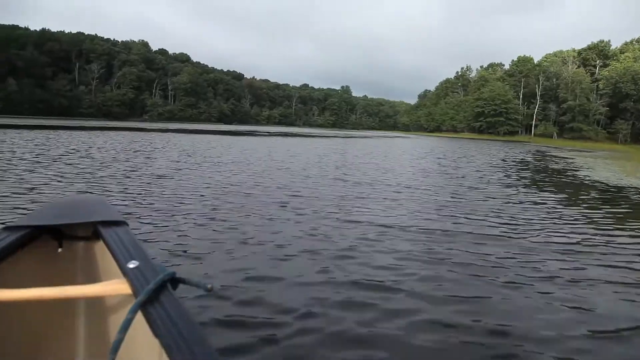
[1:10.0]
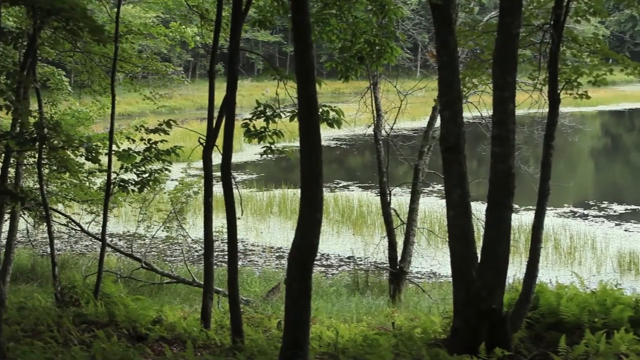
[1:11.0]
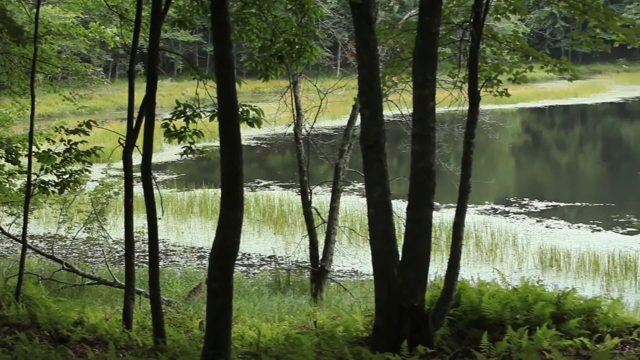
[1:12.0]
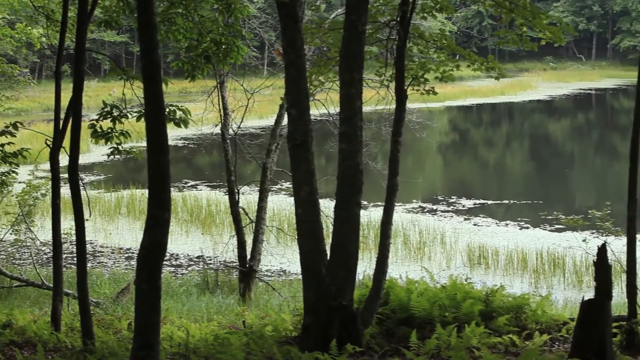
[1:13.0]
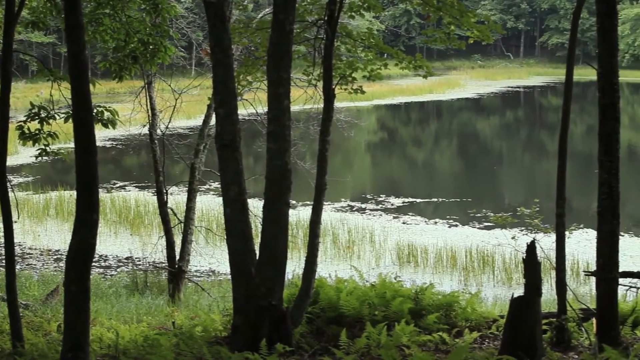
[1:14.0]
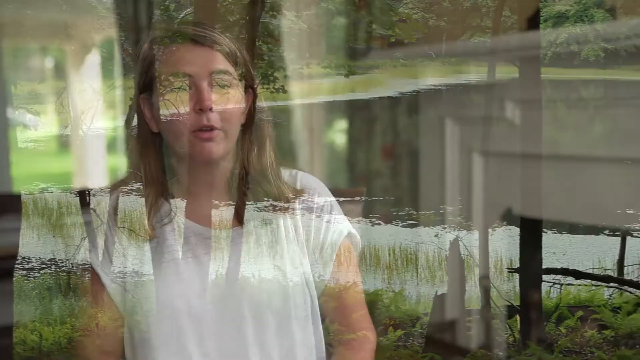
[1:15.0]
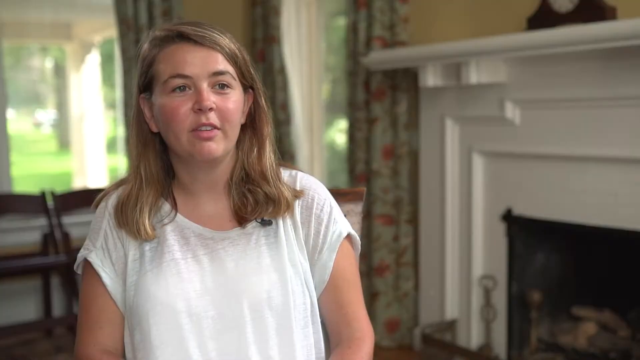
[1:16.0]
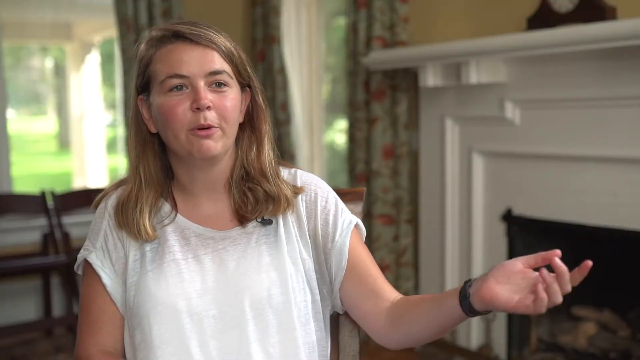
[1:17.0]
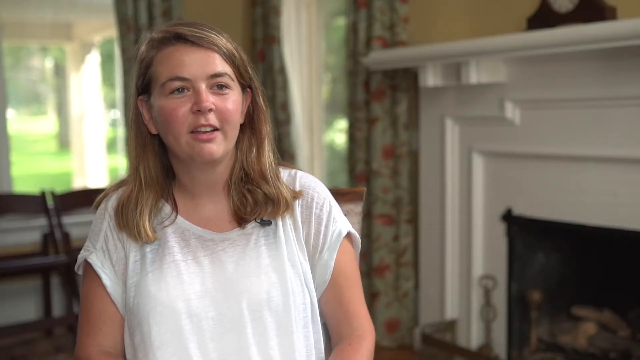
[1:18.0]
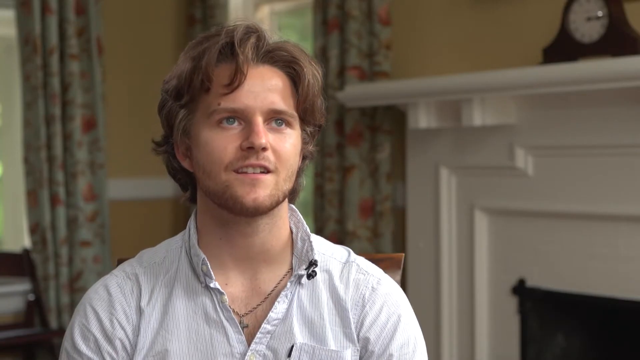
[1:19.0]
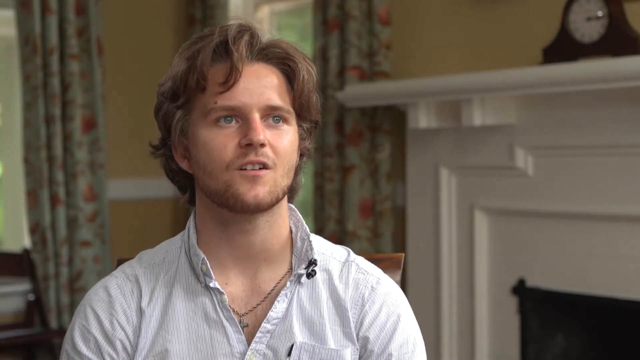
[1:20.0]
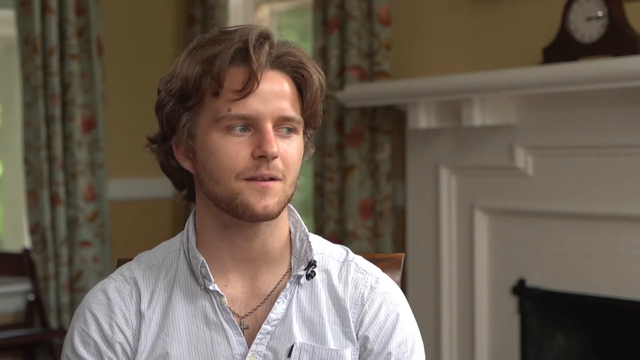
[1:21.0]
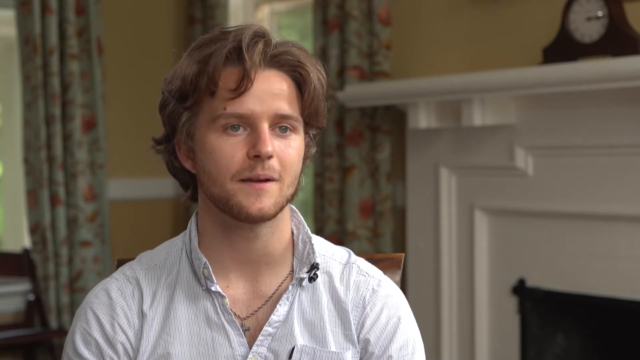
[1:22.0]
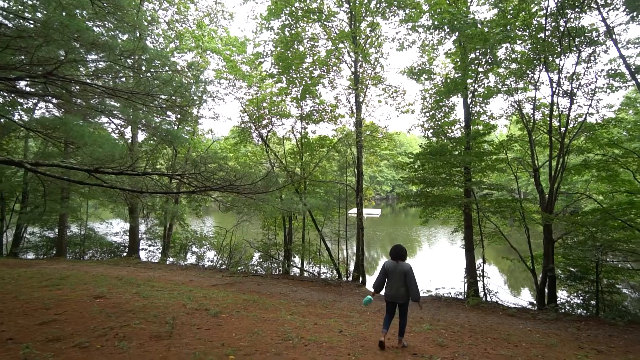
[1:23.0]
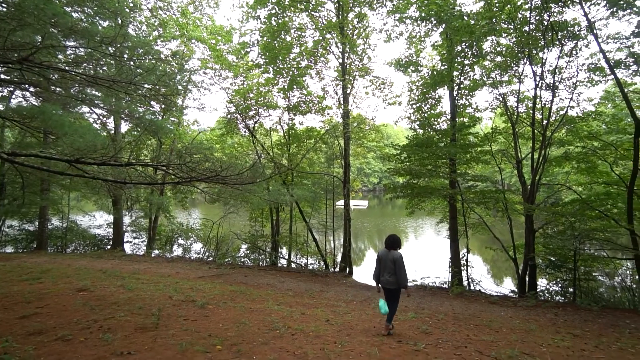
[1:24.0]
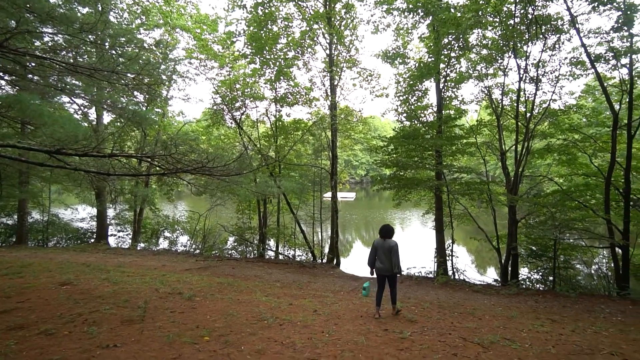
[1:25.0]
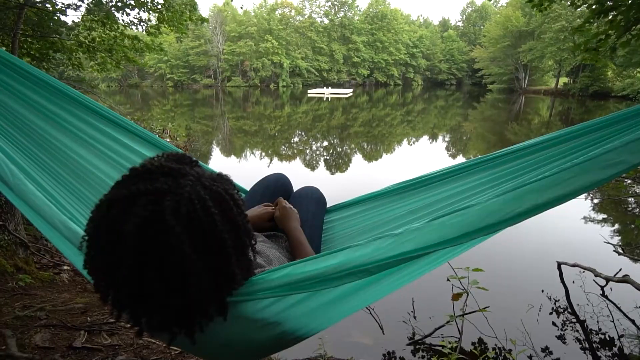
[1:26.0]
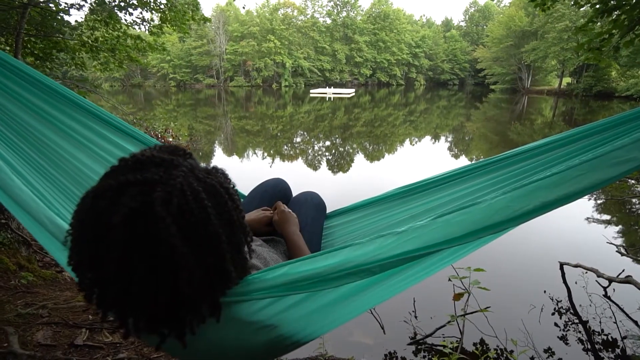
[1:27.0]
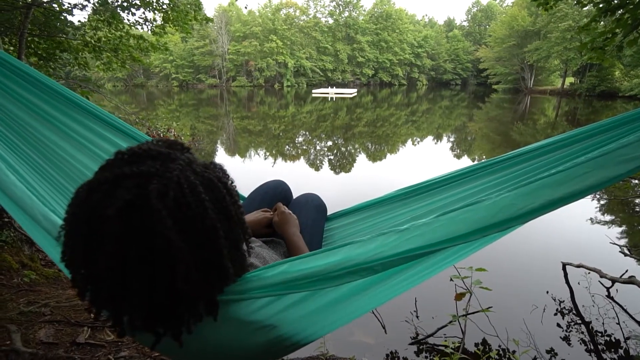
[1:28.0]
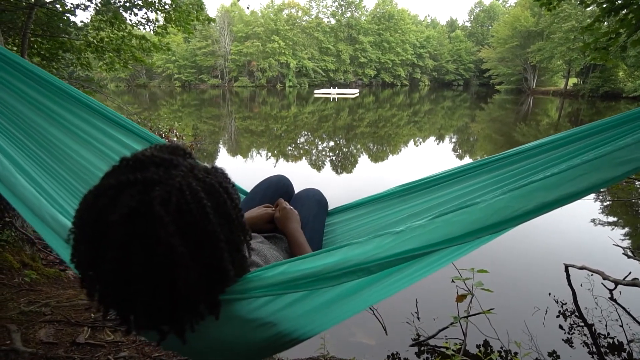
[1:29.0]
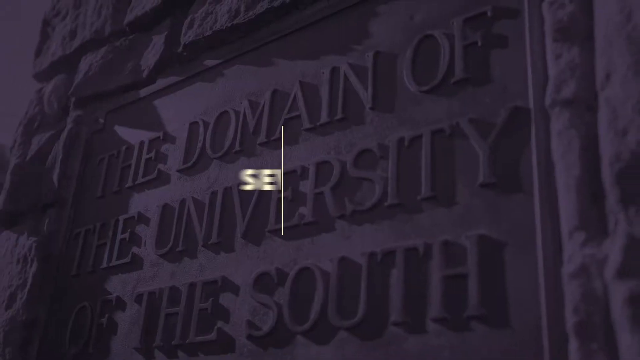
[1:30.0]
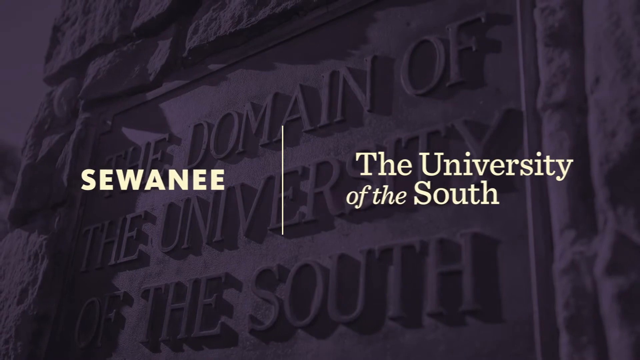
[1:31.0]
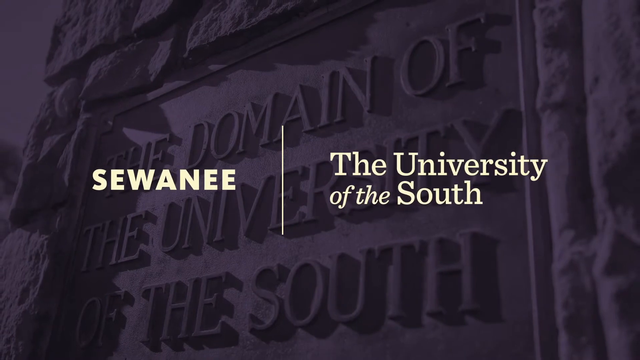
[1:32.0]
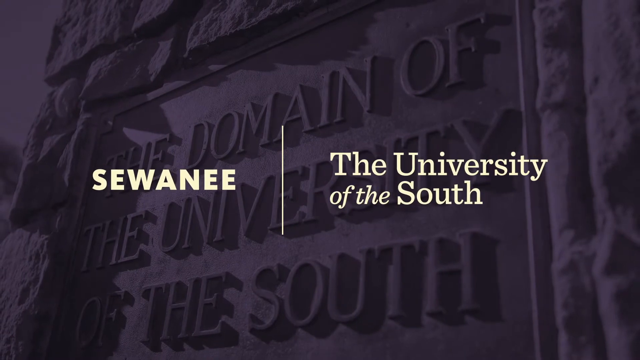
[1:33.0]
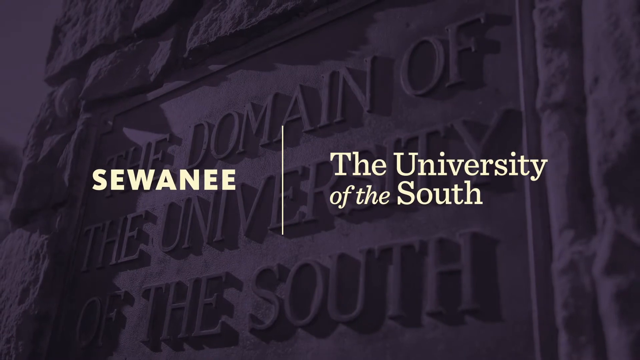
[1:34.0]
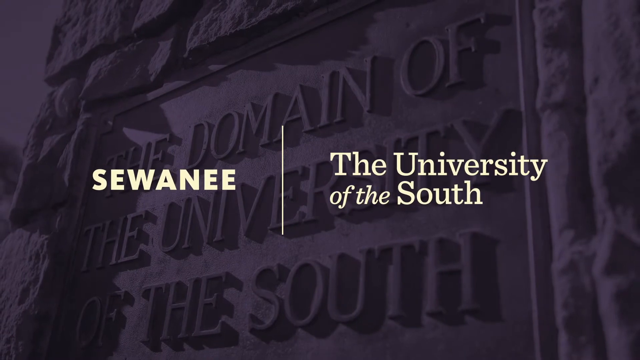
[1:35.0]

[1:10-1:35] The POV shot of the man kayaking through the lake gives way to a shot of some trees, tall green grass and a body of water behind them as the camera pans from left to right. The video cuts to the inside of the yellow-painted house, where Ellie Whitmore is sitting, speaking and moving her hands. Ben Hatfield is then also speaking, and as he looks away from the camera and continues to speak, the video cuts to a woman walking down the grounds toward the trees on the edge of the lake or river; she sits on a light blue hammock. A purple screen then appears reading "the domain of the University of the South" written in stone, with "Sewanee" in white on the left and "the University of the South" on the right.